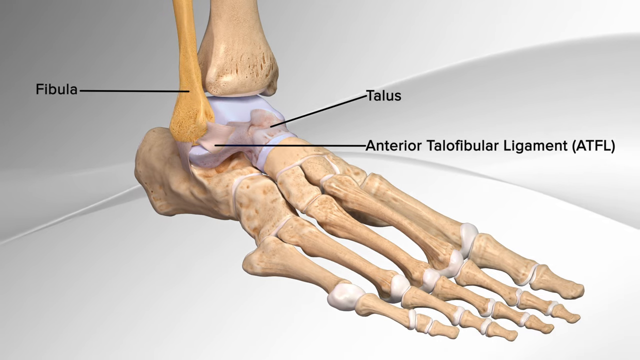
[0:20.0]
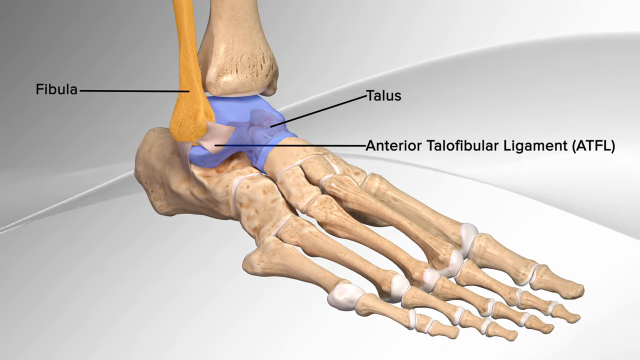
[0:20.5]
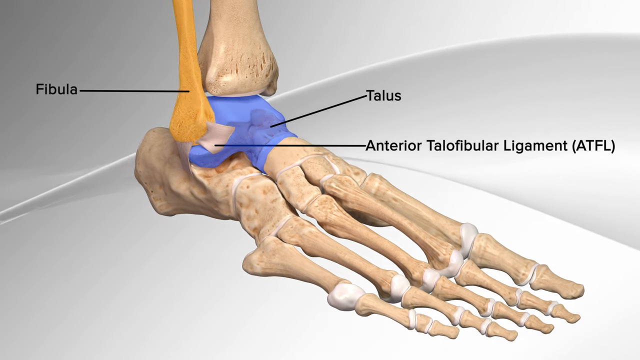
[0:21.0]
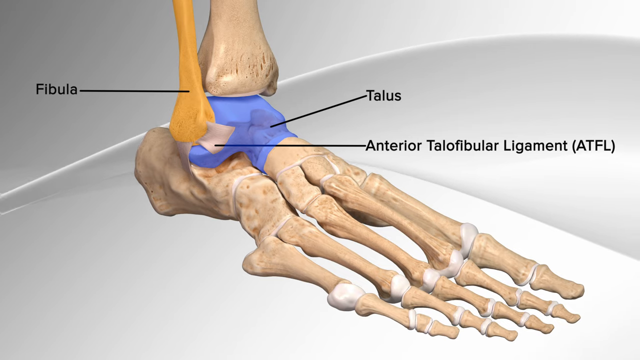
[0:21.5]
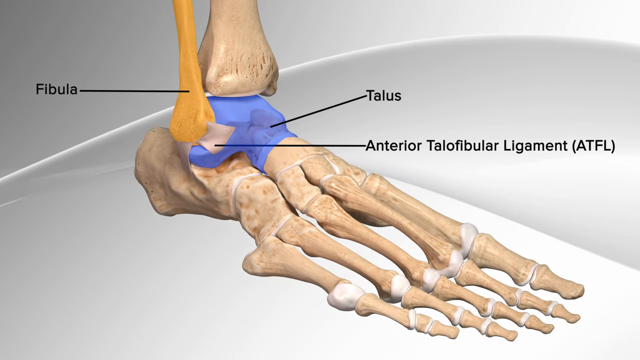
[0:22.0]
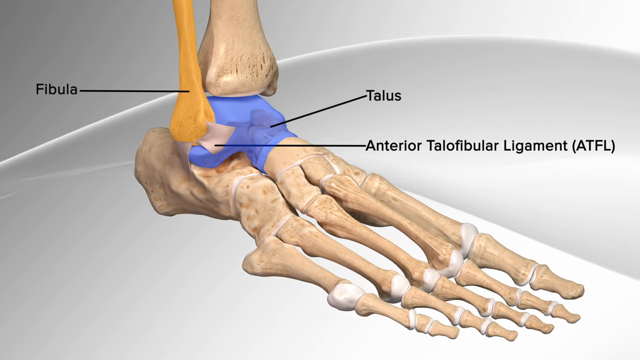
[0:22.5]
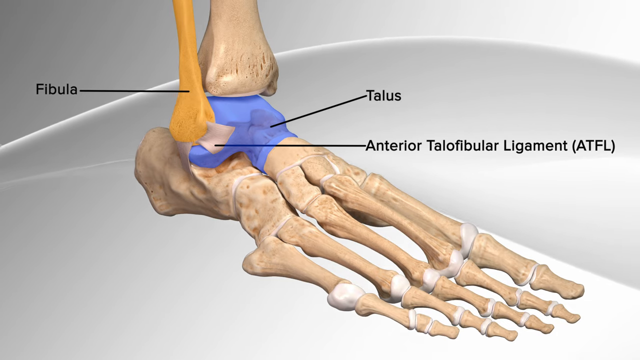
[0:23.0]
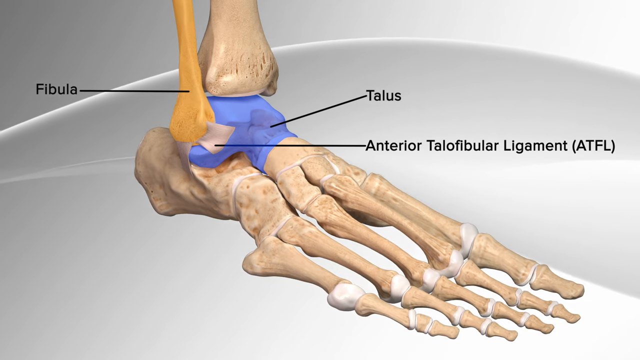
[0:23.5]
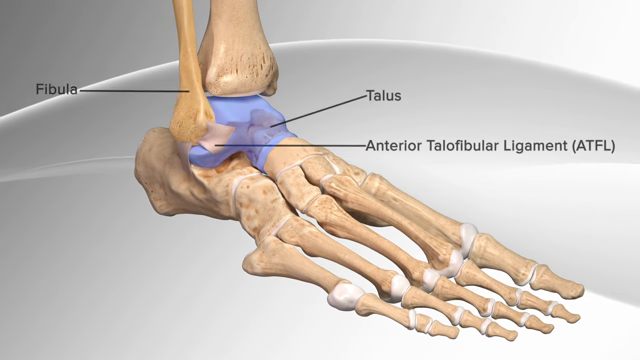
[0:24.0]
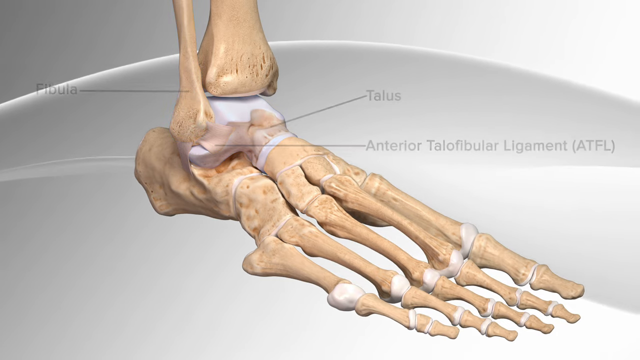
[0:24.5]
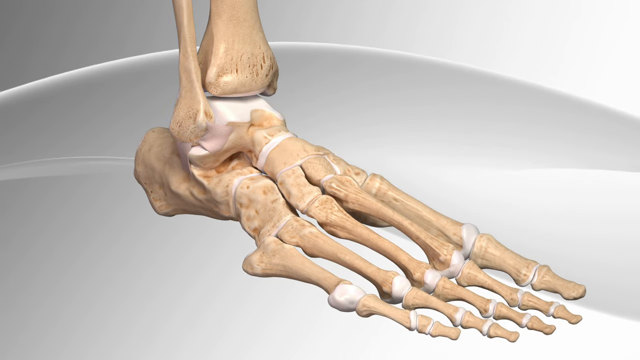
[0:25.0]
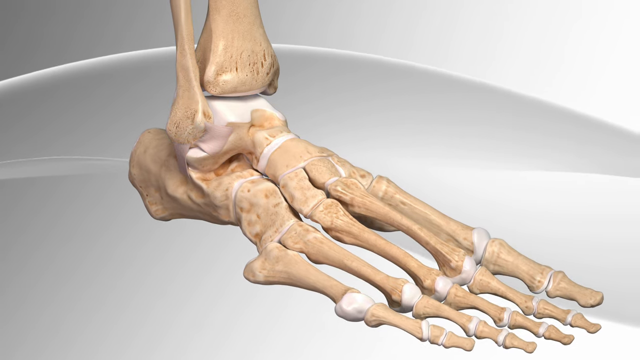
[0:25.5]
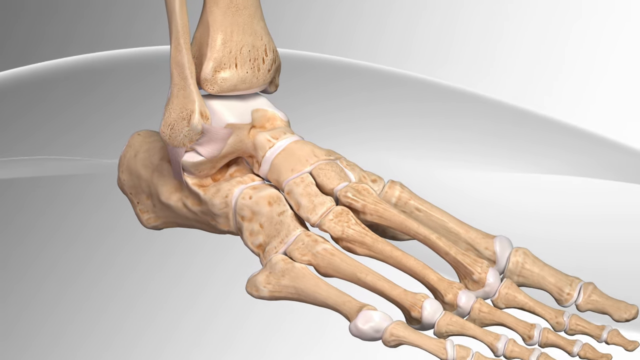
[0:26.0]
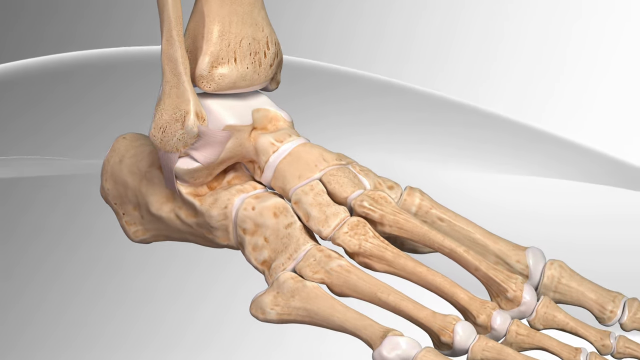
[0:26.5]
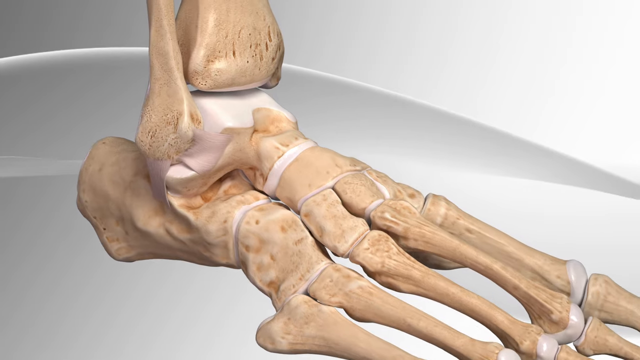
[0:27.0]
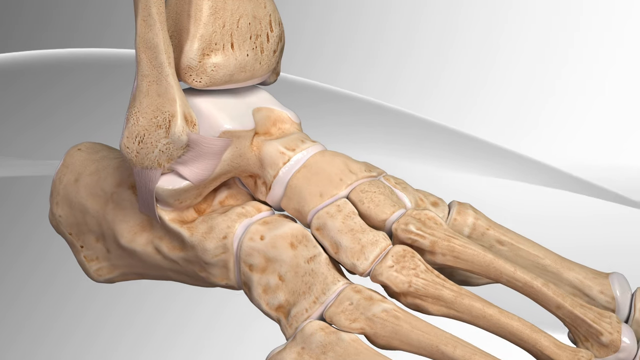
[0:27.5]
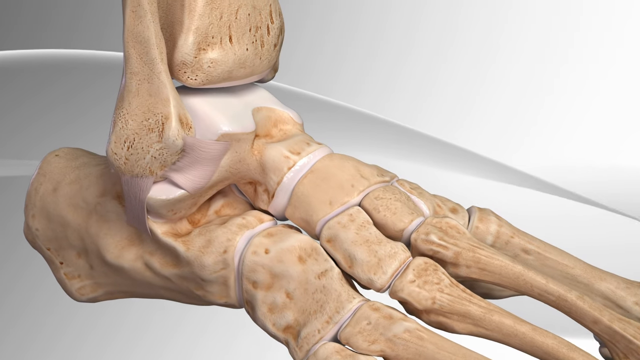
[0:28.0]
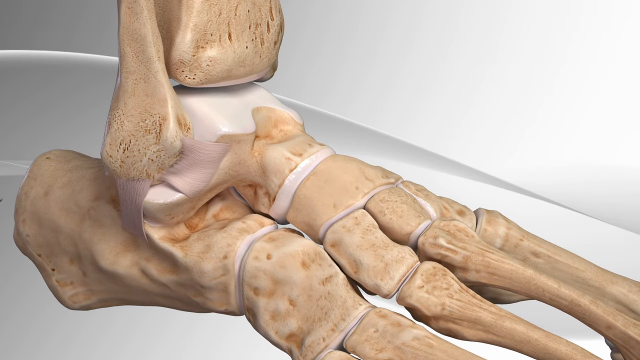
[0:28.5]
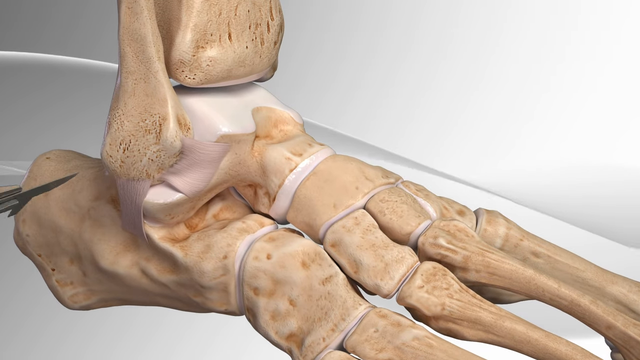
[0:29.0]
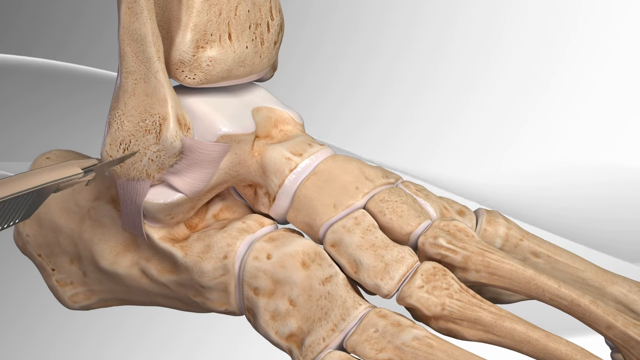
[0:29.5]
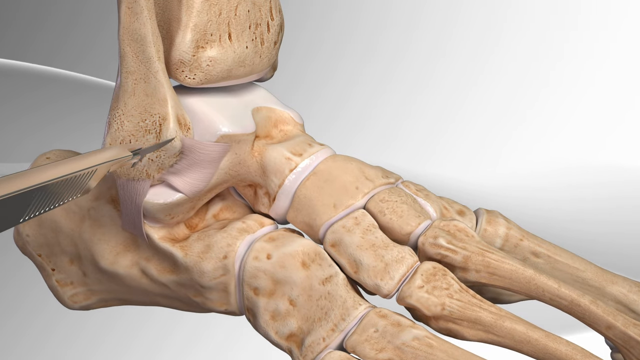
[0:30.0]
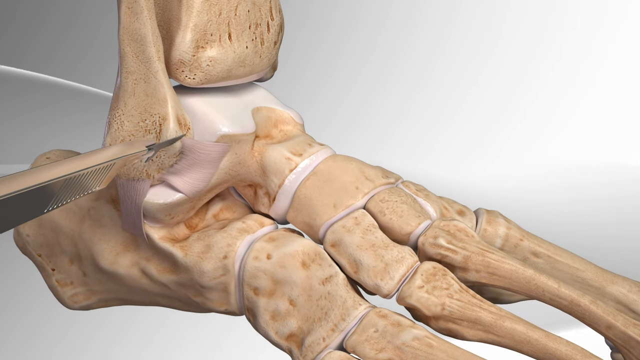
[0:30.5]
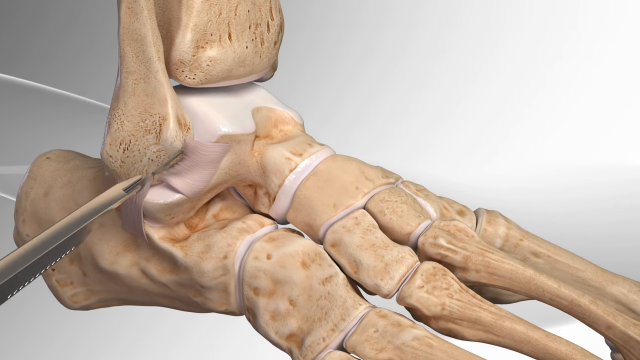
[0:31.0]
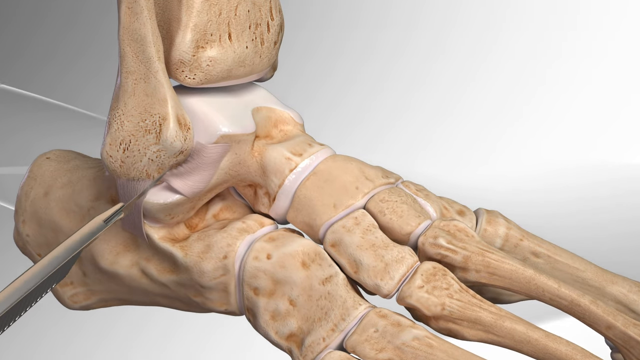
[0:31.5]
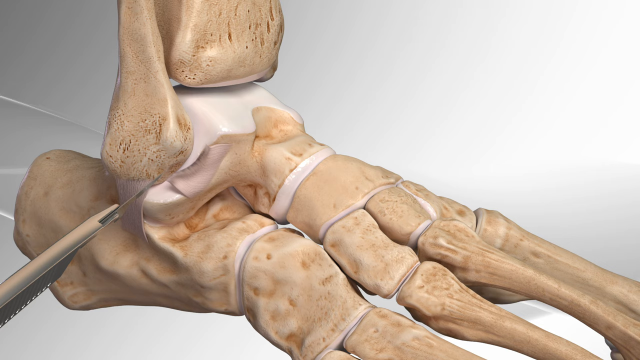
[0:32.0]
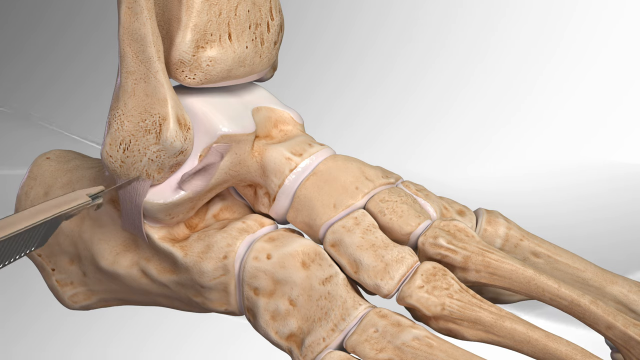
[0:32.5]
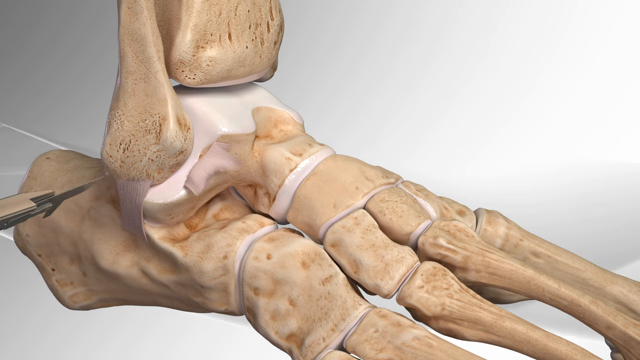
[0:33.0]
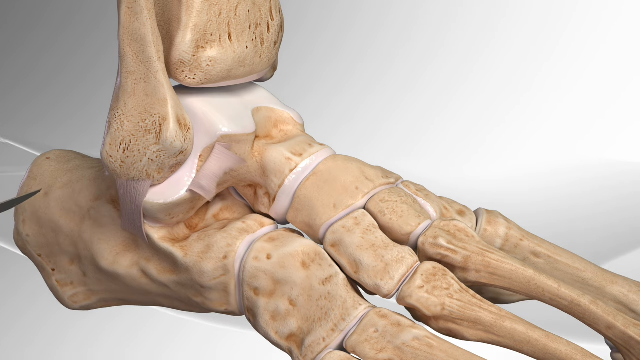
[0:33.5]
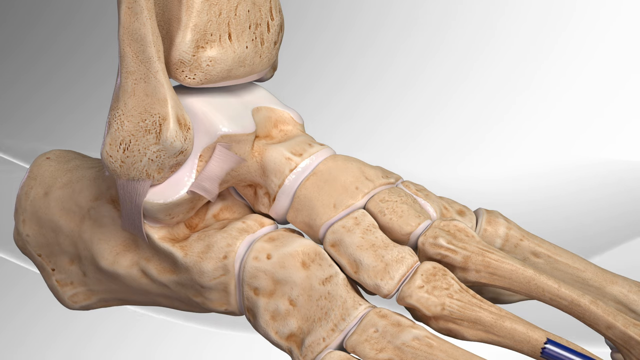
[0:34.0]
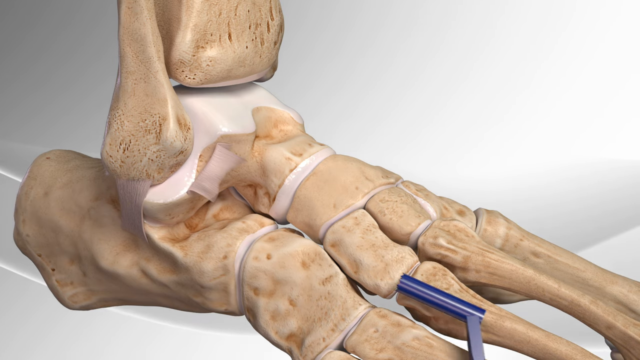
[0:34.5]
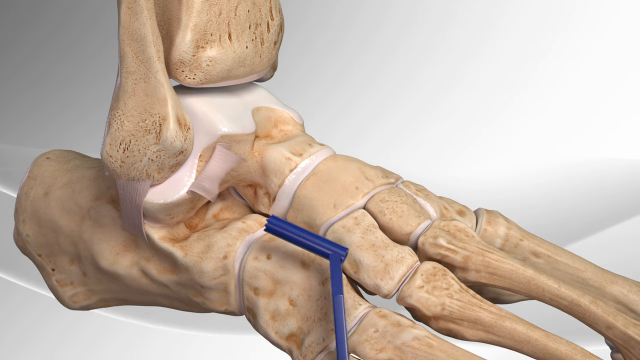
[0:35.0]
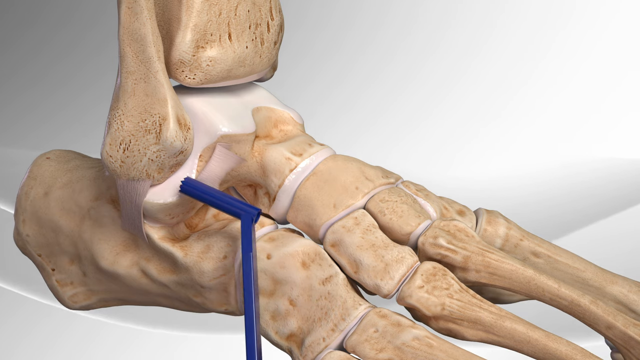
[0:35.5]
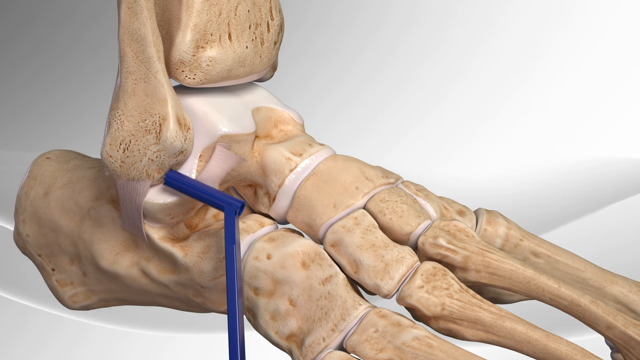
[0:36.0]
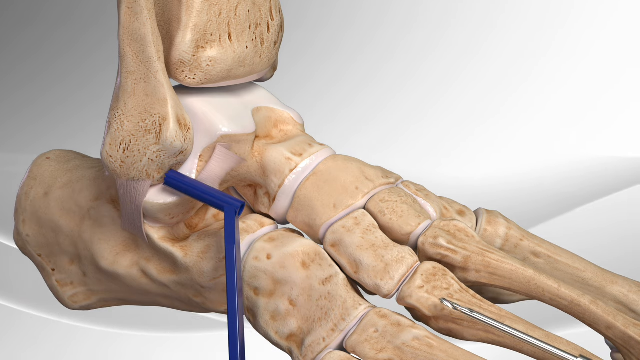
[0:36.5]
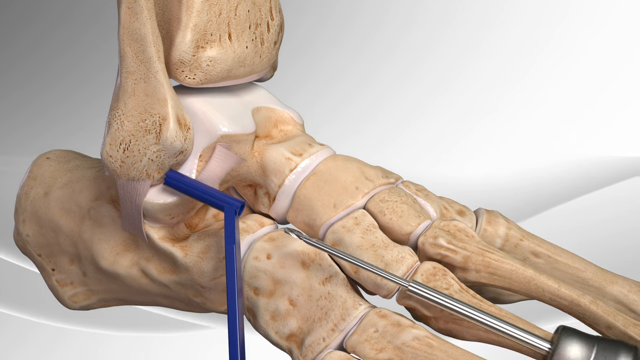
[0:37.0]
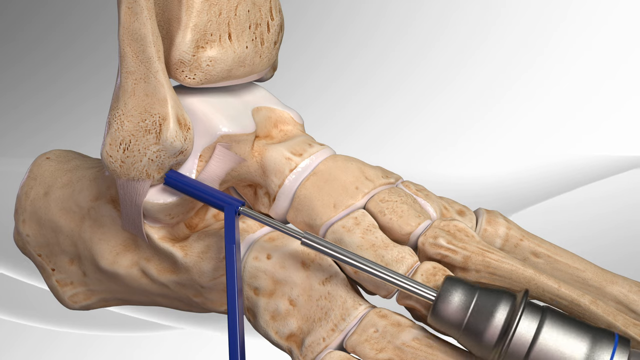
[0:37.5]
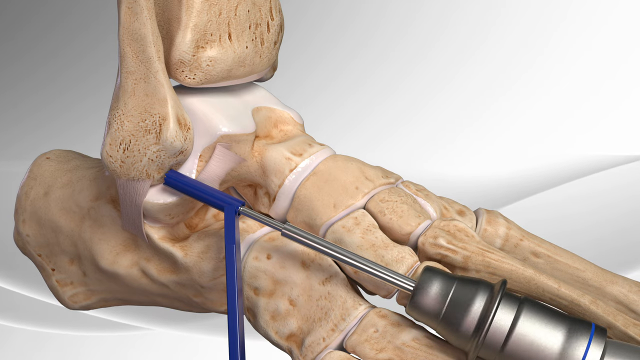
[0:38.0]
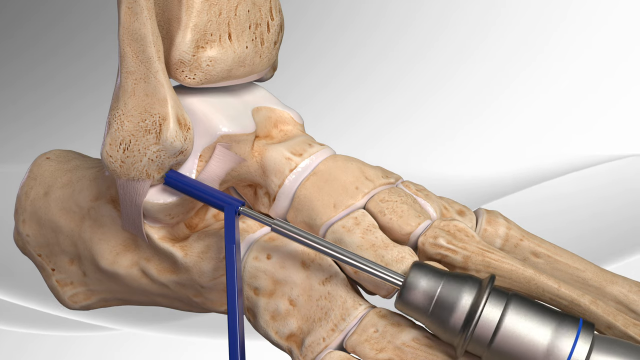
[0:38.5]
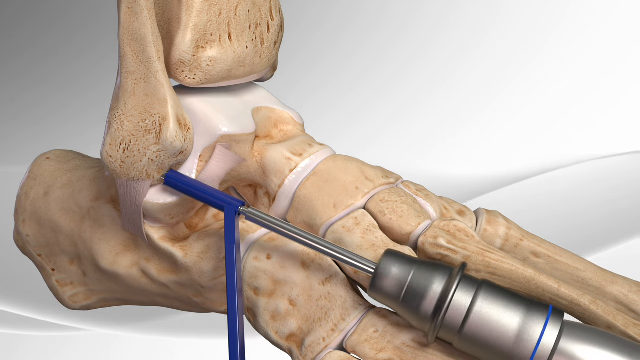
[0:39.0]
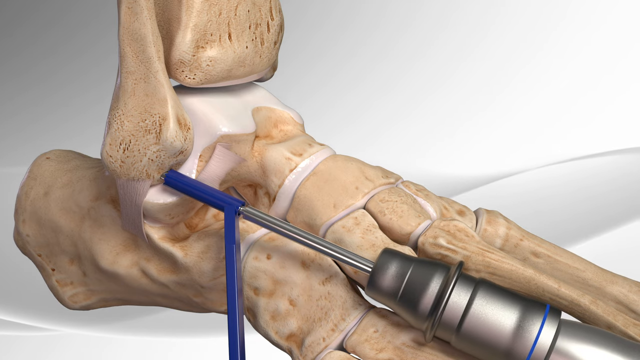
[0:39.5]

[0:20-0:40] The view stays focused on the right foot. "Fibula" is labeled with a pointer, and "talus" on the right is shown in a blue area; the talus is apparently the bone that connects the ankle to the leg. Under "talus", the text "anterior talofibular ligament ATFL" points to the ligament. The view then zooms in even more on the ankle, and a scalpel comes in and cuts the top part of the ATFL. Next, a blue instrument that looks like it may be hollow comes in, and a drill goes into it and drills into the ankle bone. It looks like it may be some kind of surgical procedure in which the ligament is cut and the bone is drilled.